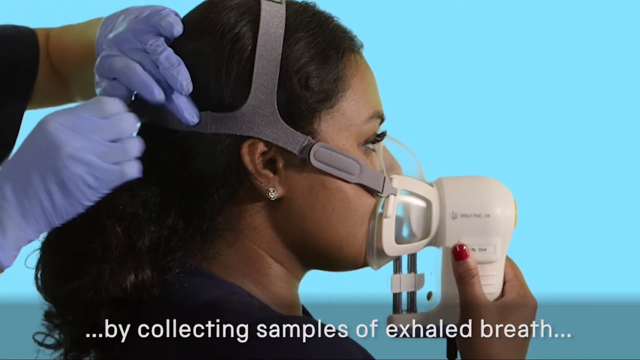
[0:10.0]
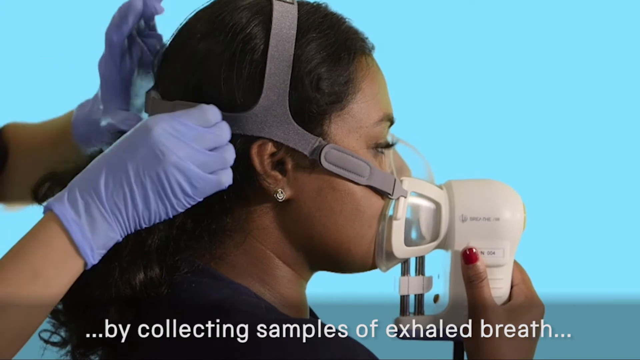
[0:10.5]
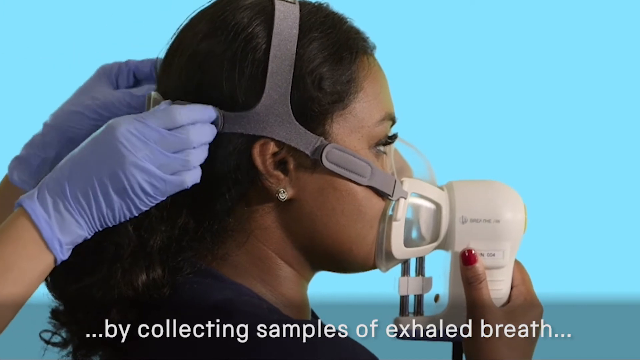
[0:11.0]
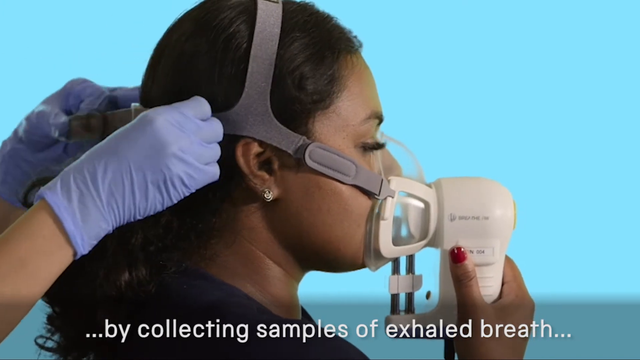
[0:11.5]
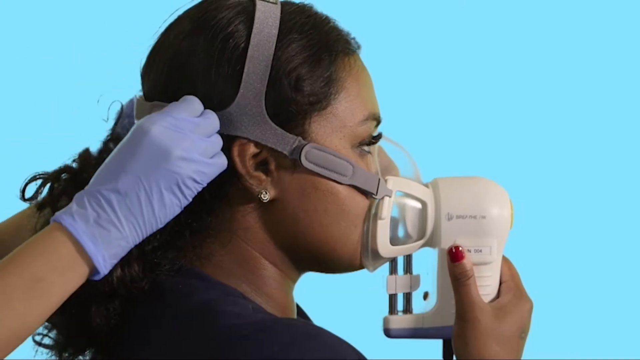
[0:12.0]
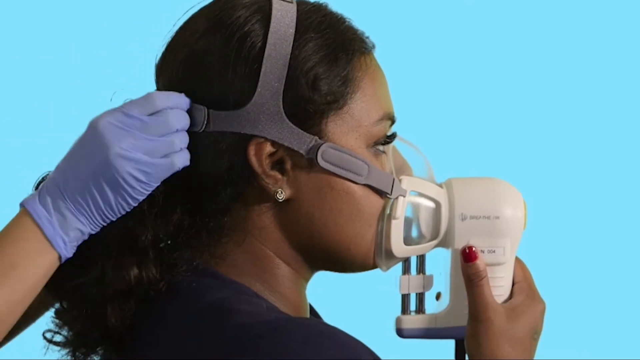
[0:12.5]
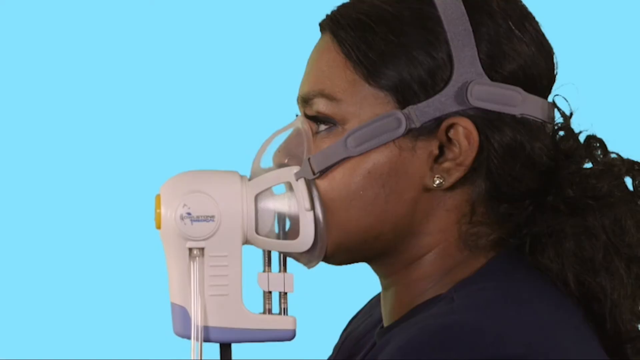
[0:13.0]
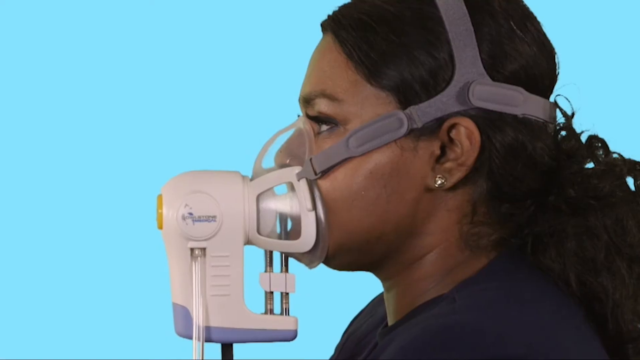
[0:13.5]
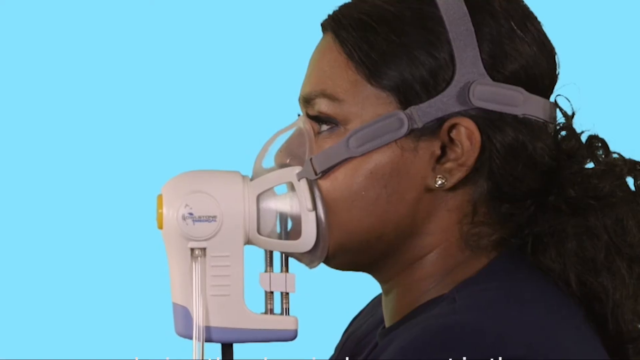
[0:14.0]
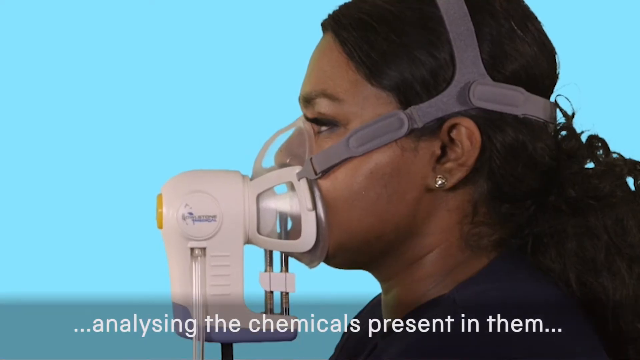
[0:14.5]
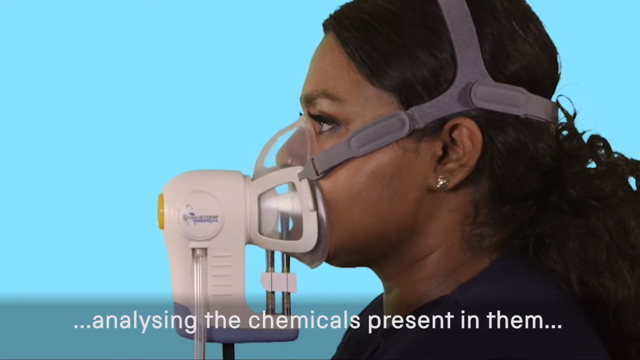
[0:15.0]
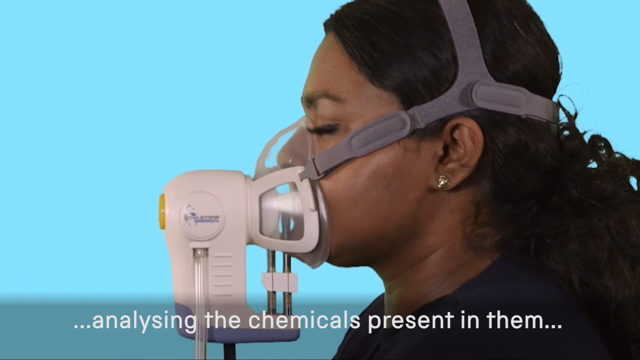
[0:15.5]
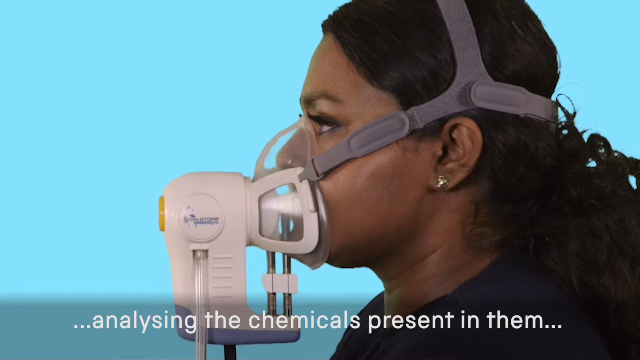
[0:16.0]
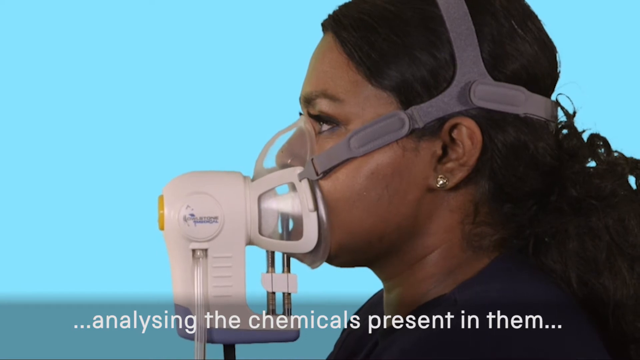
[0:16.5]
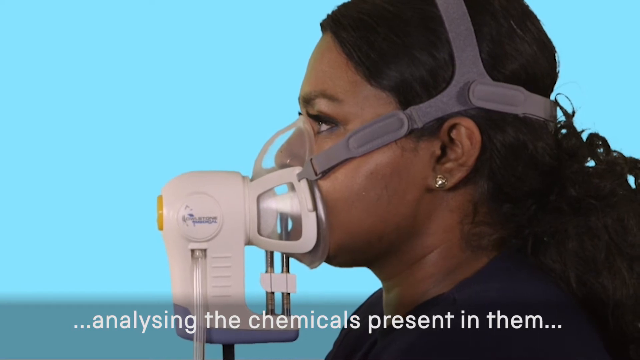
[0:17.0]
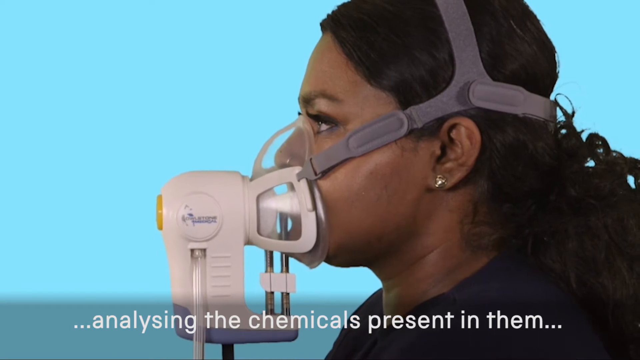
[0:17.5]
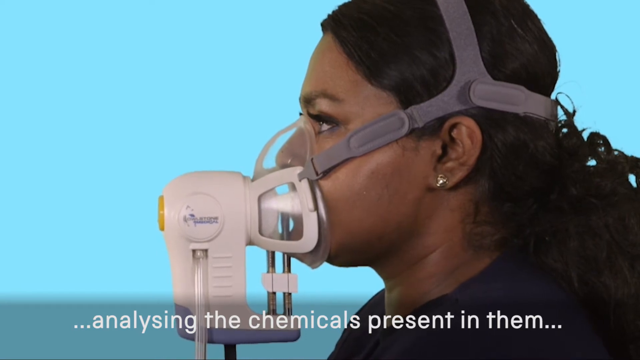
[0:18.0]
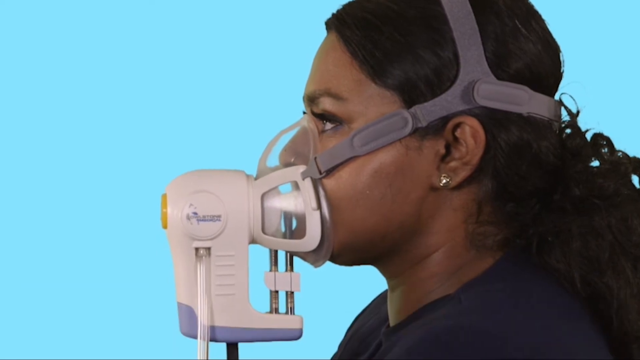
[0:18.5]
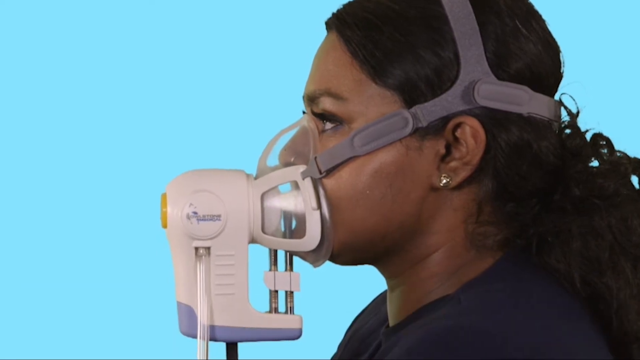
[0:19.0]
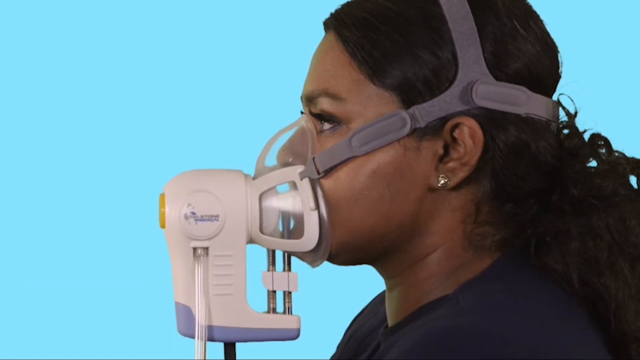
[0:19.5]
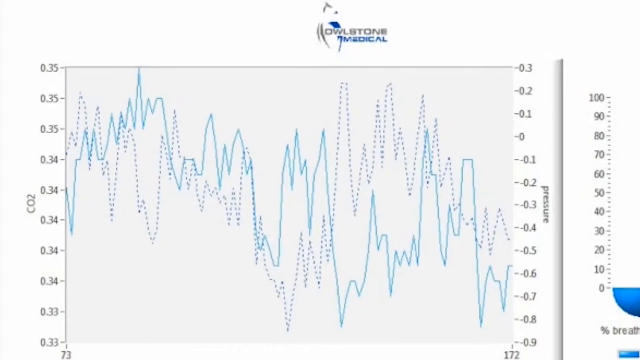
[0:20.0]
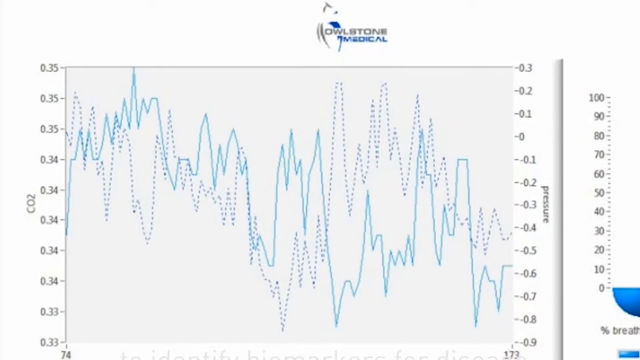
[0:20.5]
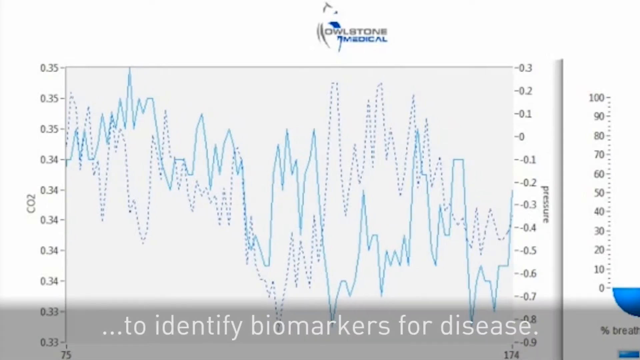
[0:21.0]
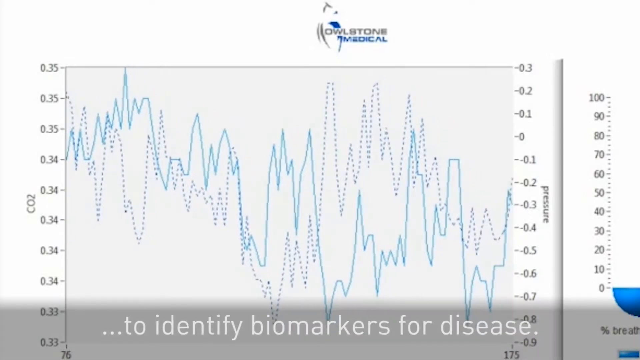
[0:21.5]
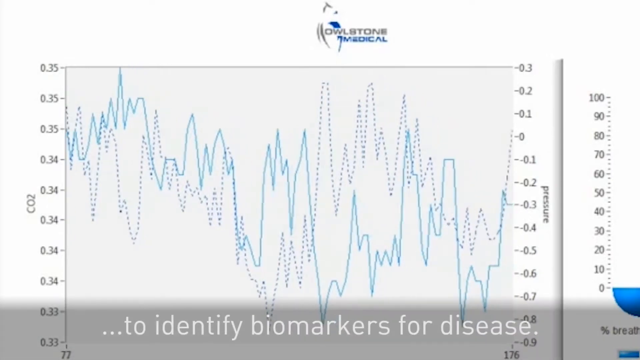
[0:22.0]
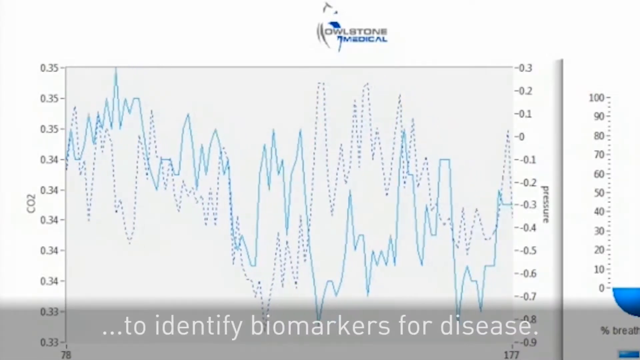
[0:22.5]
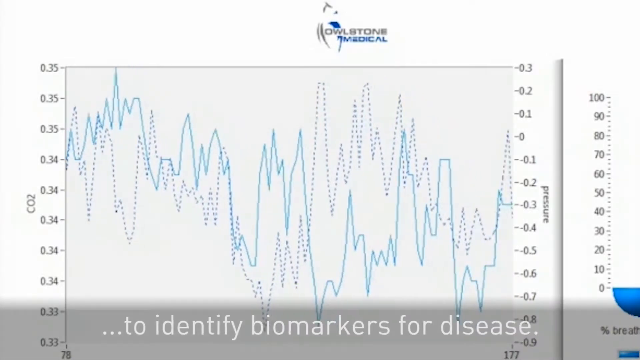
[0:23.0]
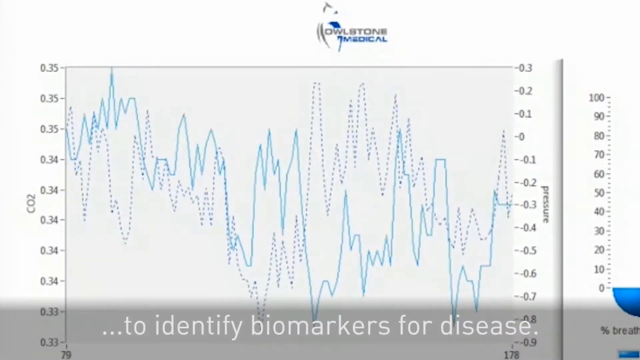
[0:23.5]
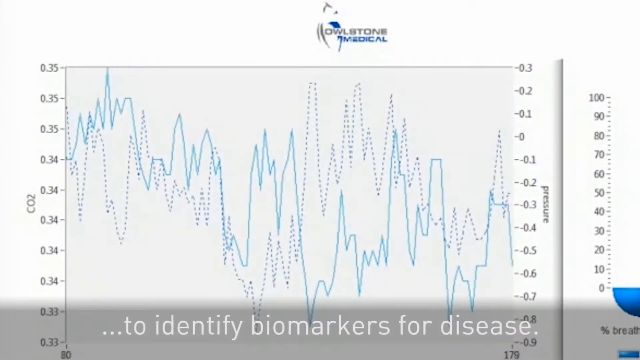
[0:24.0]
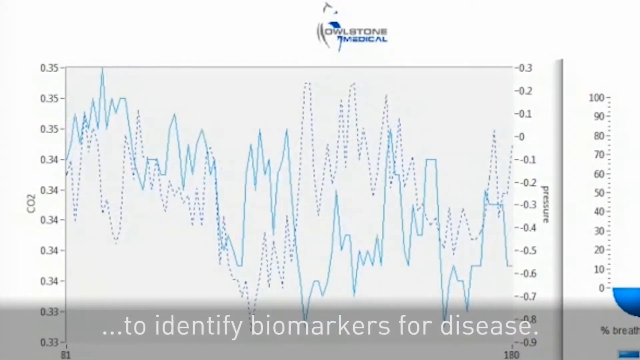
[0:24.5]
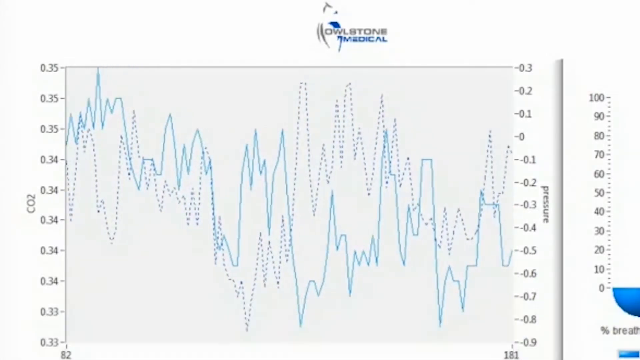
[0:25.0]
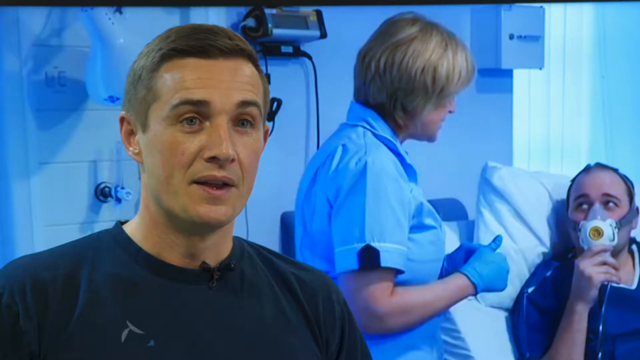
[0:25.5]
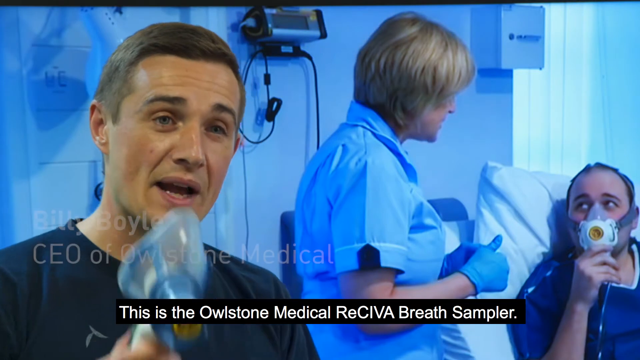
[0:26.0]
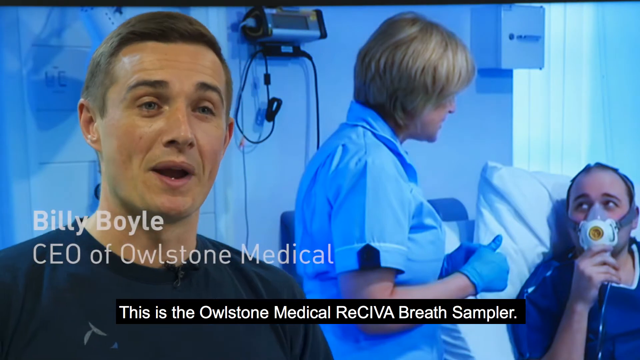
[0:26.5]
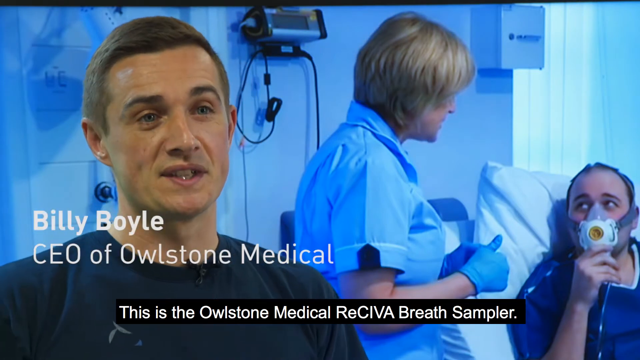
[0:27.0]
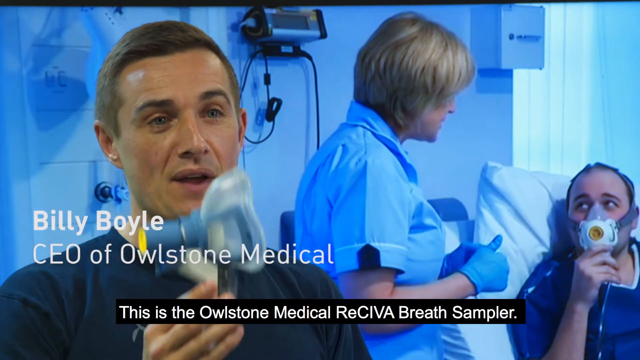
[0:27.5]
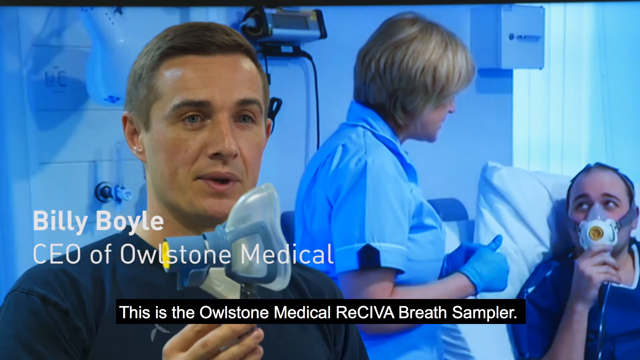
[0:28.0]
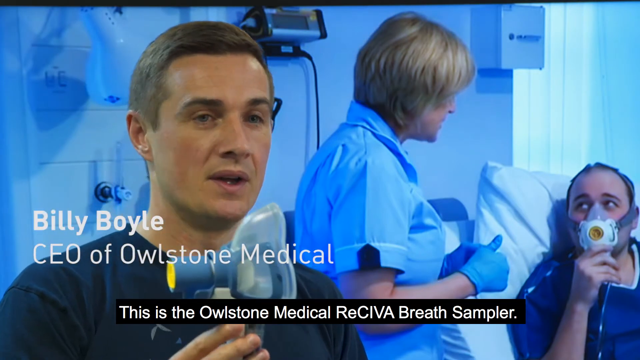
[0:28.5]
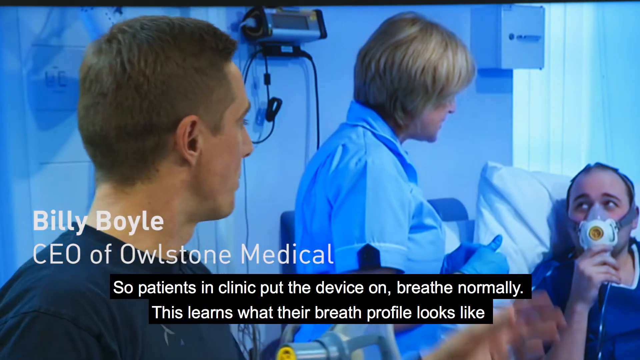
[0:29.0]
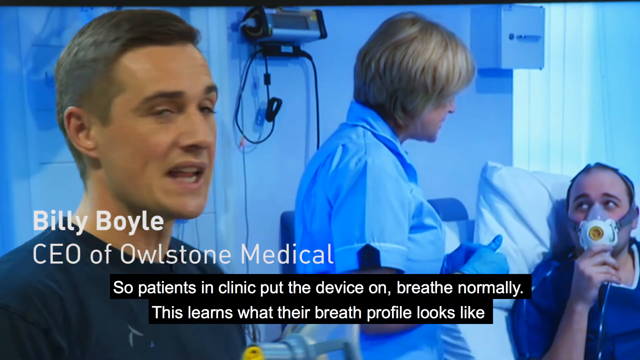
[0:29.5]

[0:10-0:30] The breath collector is identified by name as the Redstone Collector, a new product made by a company called Owlstone Medical. Toward the end of this section, the CEO of Owlstone Medical appears, holding one of the masks near his face and looking out into space. Behind him is a picture of a medical assistant giving the breath test to a person lying in a bed in a hospital or medical setting.